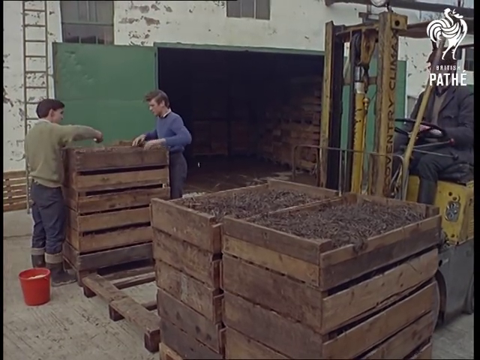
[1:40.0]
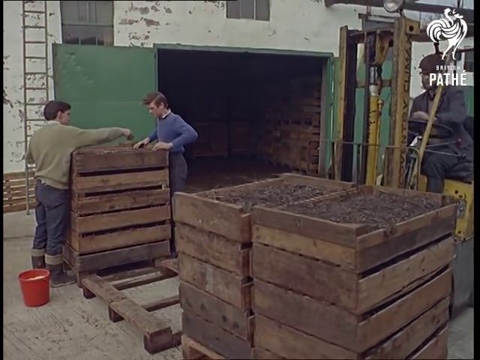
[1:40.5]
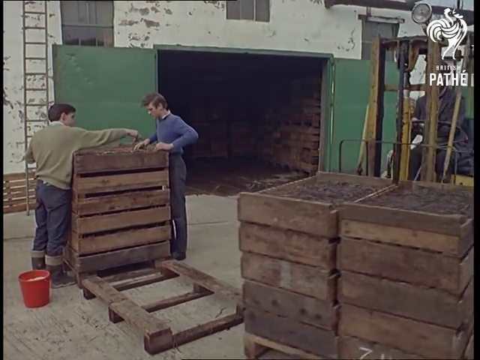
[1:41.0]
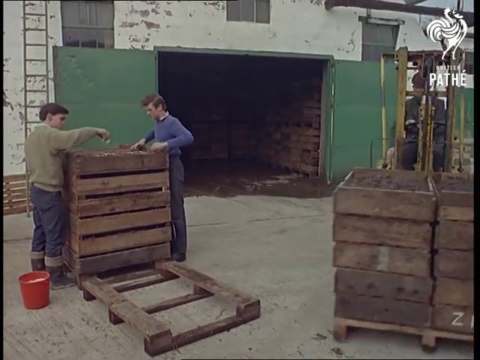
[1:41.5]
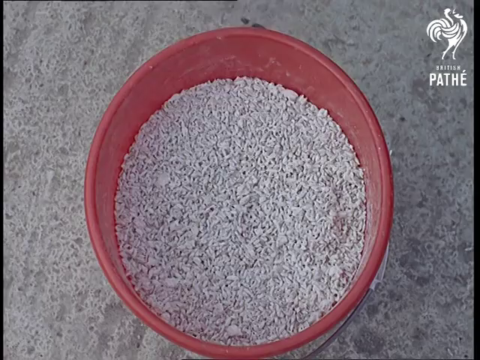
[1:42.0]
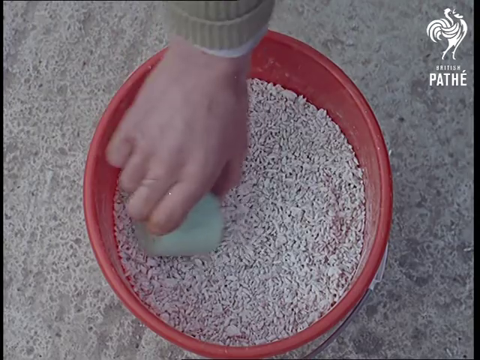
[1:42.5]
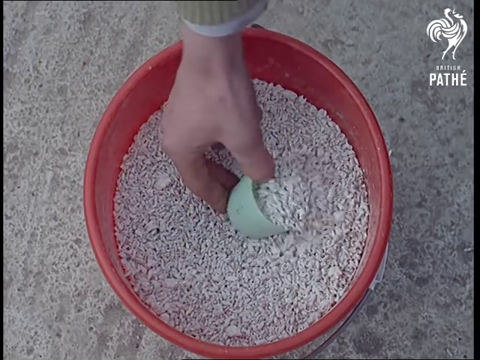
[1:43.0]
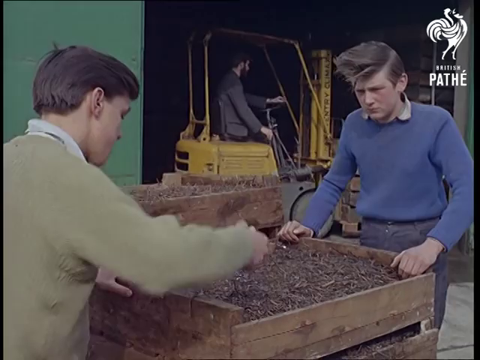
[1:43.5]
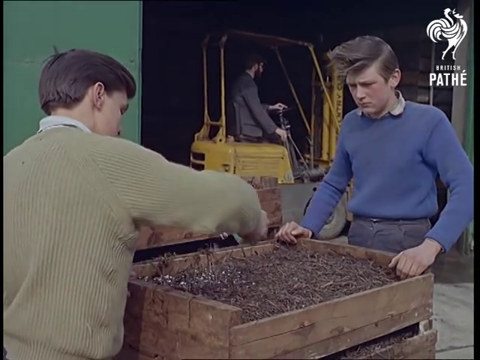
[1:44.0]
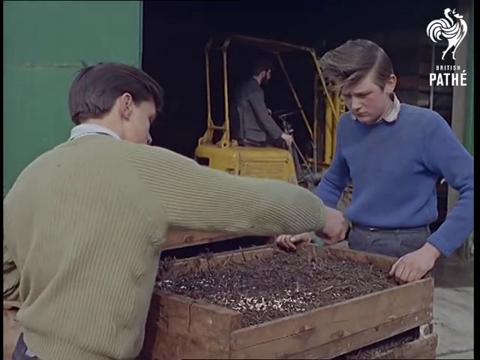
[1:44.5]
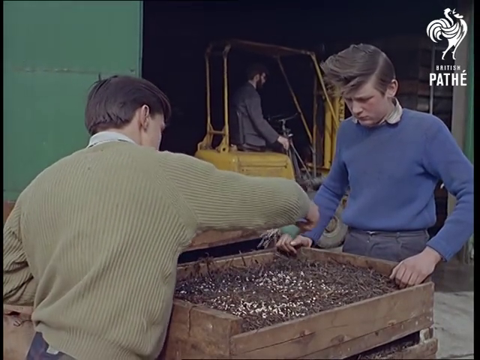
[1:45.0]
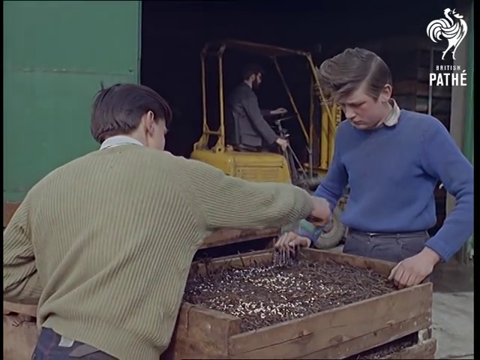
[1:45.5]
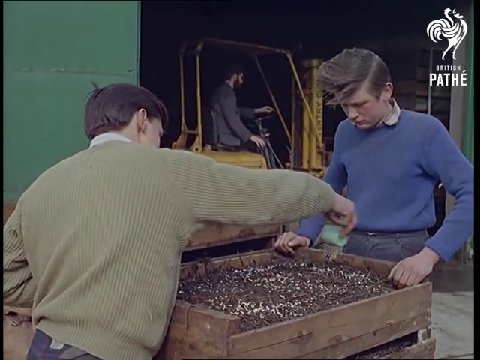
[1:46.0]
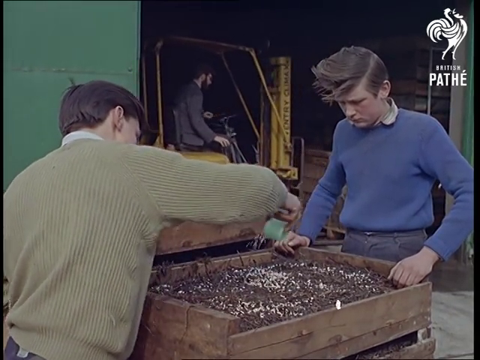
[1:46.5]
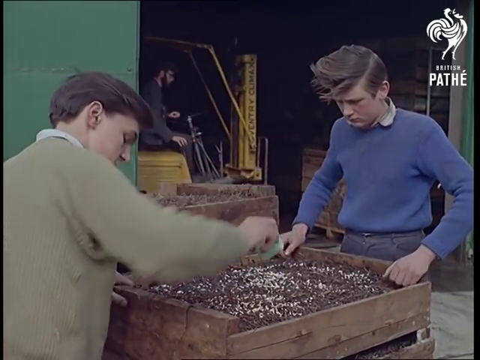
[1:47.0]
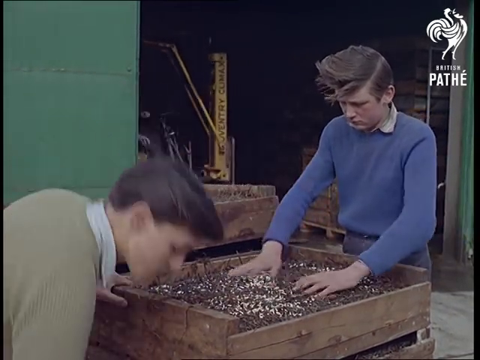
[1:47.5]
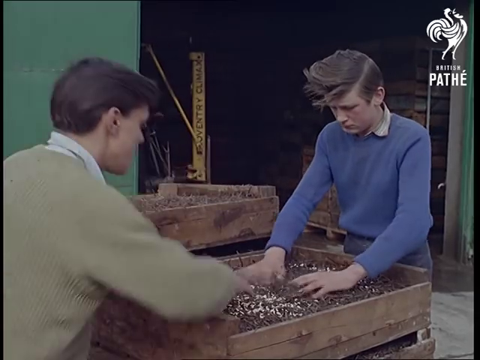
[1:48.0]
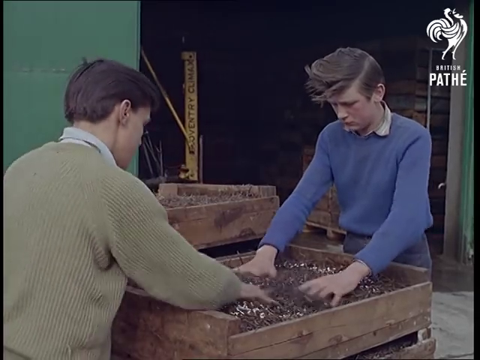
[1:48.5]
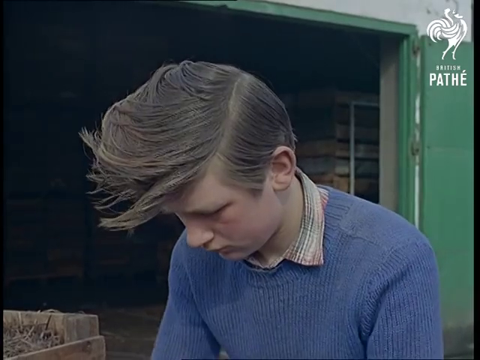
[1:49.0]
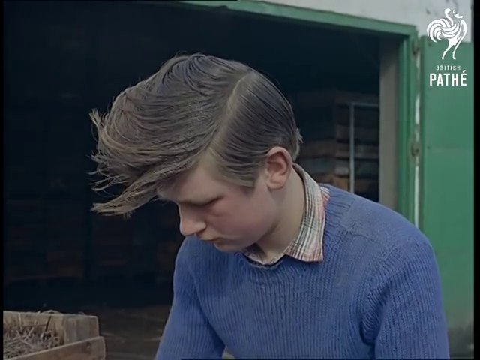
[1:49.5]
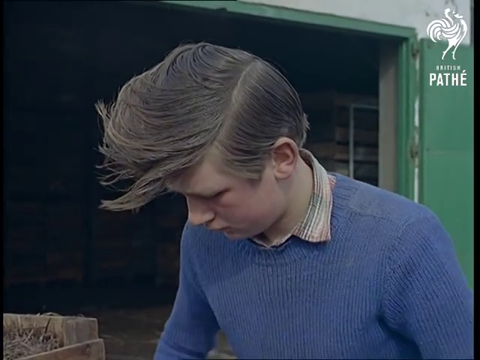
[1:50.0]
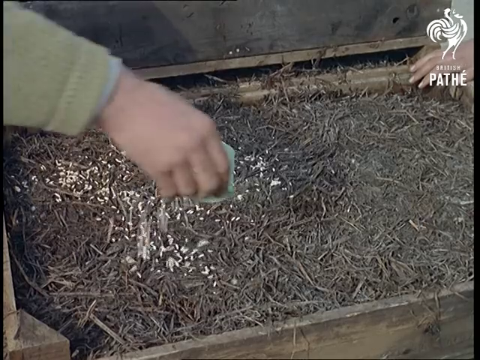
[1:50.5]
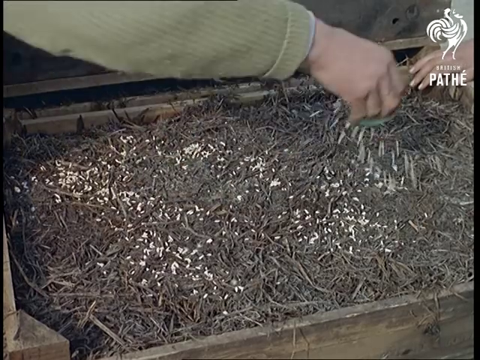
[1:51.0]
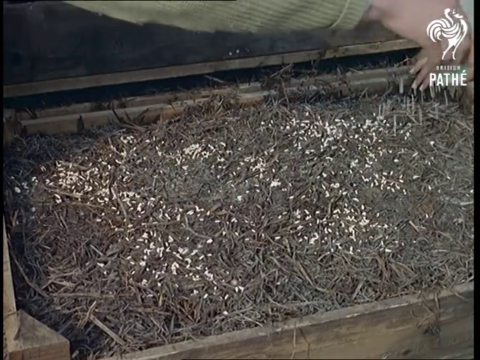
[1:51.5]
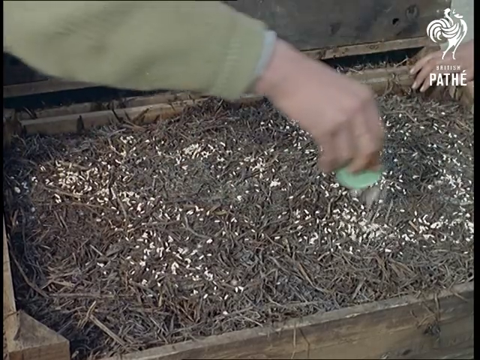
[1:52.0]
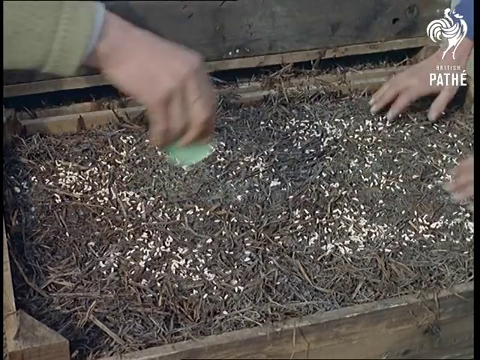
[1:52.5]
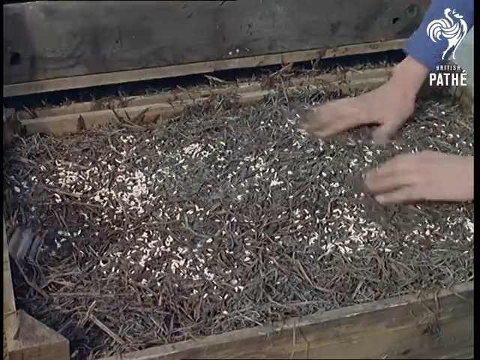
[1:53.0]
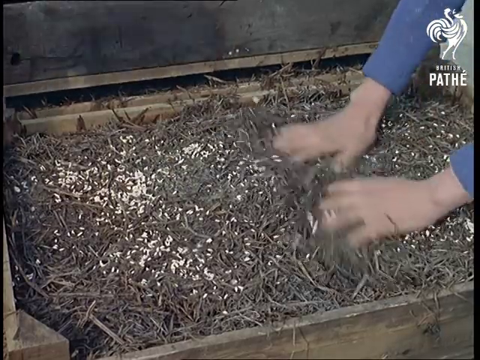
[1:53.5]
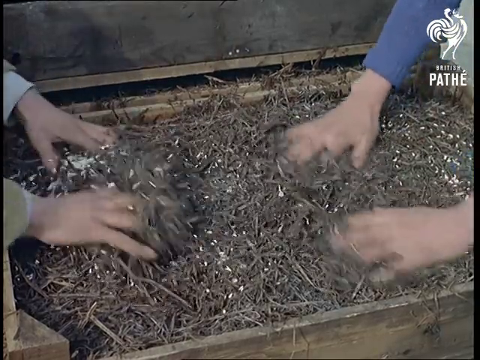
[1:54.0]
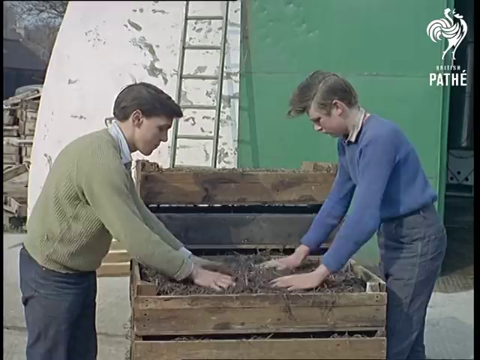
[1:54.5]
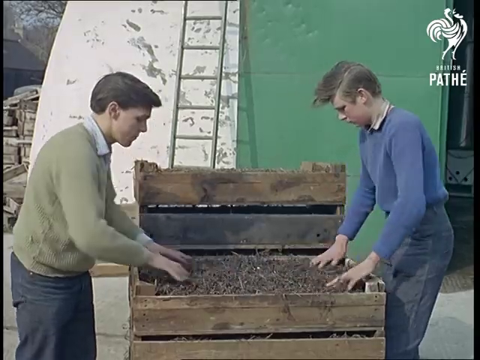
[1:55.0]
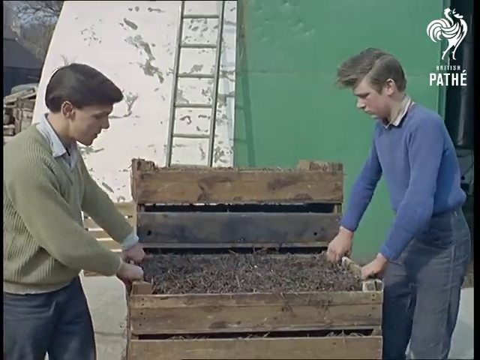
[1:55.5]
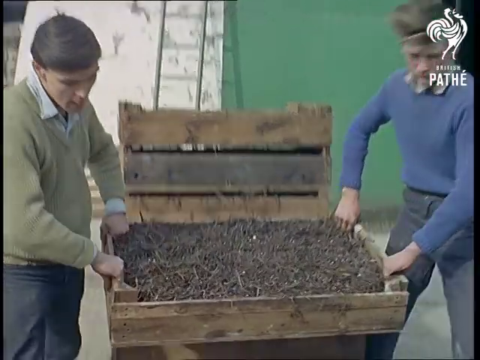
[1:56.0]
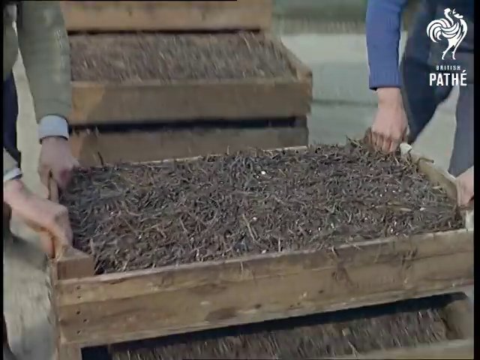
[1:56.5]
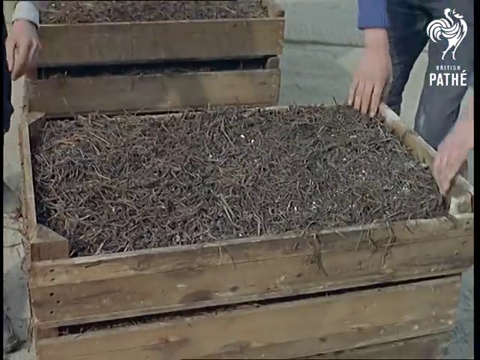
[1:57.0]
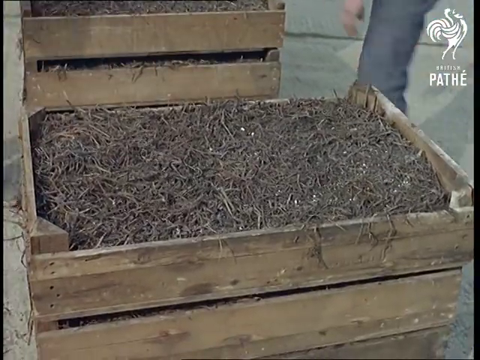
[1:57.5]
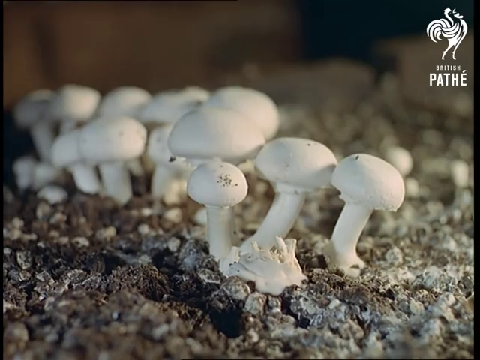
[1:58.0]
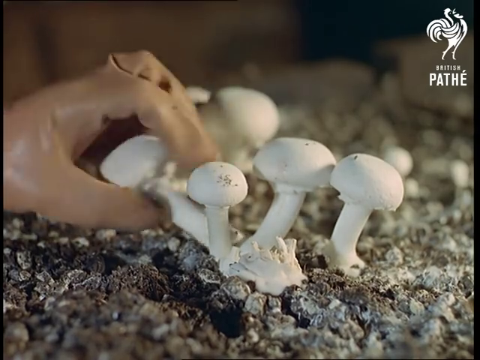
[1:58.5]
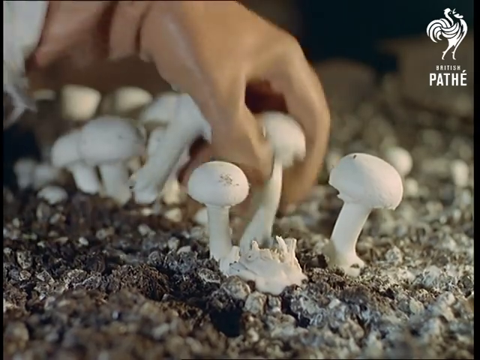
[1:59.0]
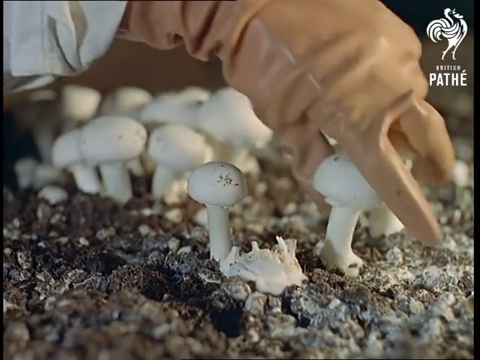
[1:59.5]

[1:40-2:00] Two young men work at pallets packed with soil for the mushrooms, sprinkling seeds onto the soil. One of them leans down into a red bucket, takes one cup of seeds, and sprinkles it on, and both of them shake their hands vigorously to spread the seeds out evenly. Together they lift one pallet and walk it over to a stack of pallets. When the stack reaches about eight pallets, four on each side, a forklift driver comes and picks them up. The work is very systematic.